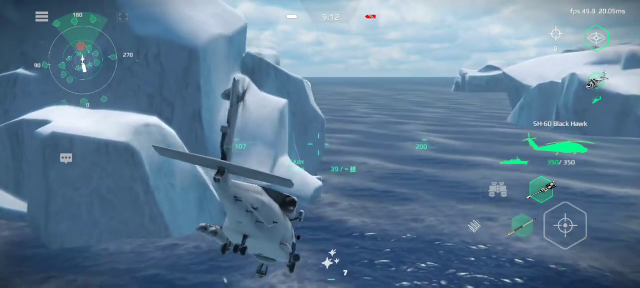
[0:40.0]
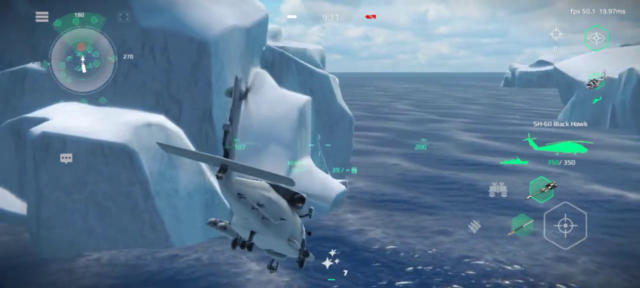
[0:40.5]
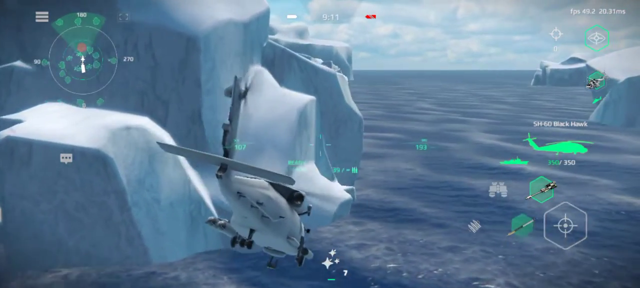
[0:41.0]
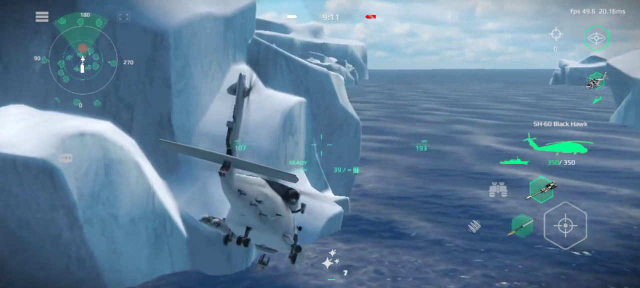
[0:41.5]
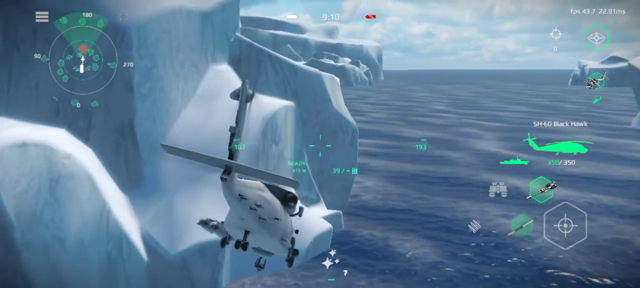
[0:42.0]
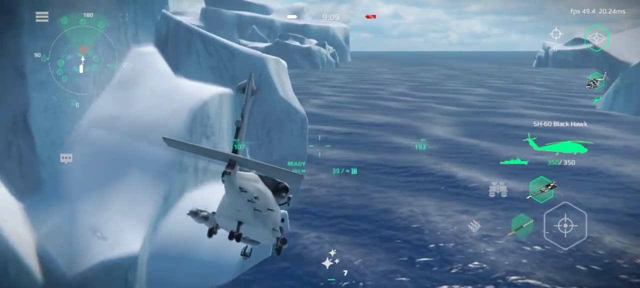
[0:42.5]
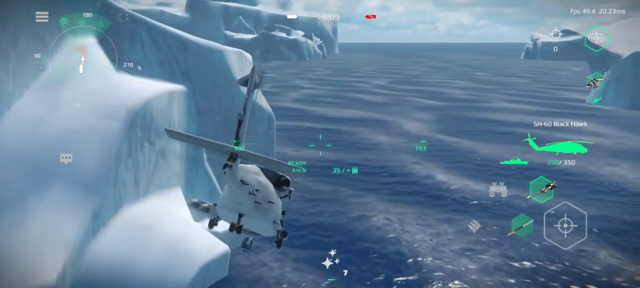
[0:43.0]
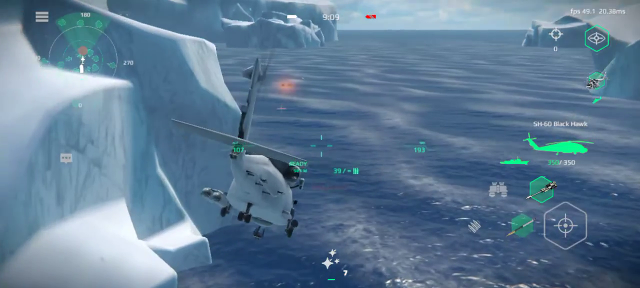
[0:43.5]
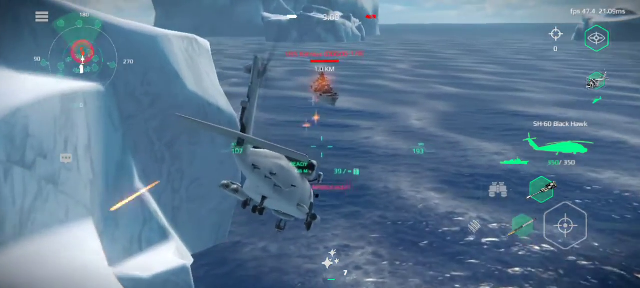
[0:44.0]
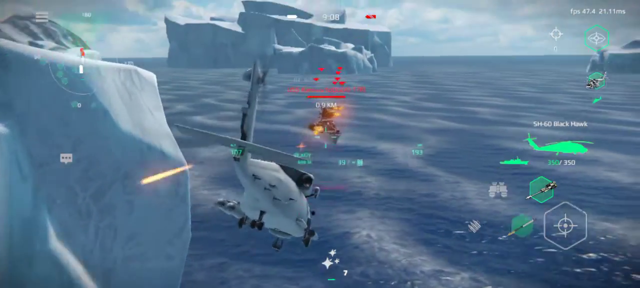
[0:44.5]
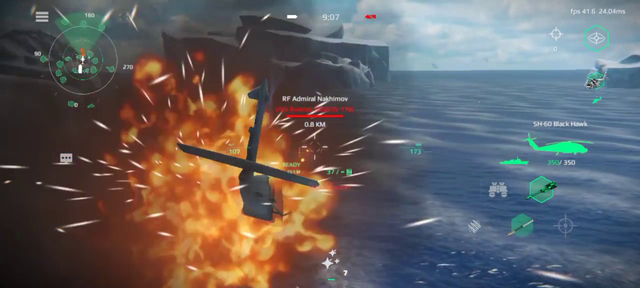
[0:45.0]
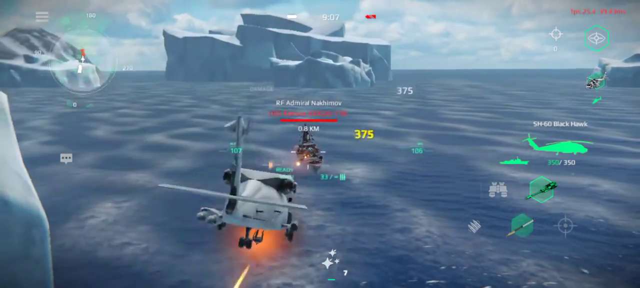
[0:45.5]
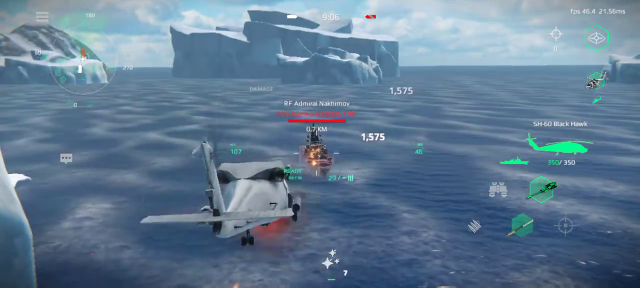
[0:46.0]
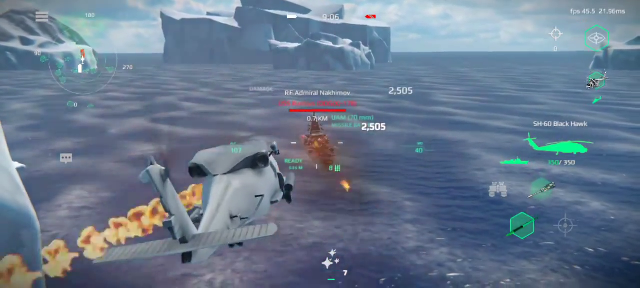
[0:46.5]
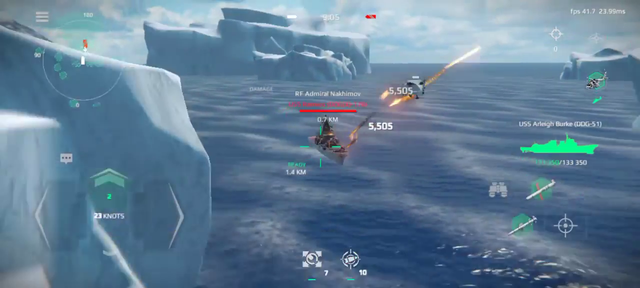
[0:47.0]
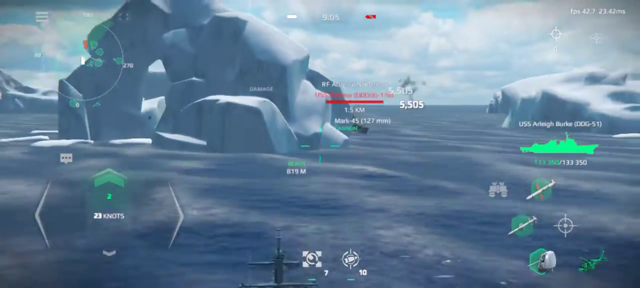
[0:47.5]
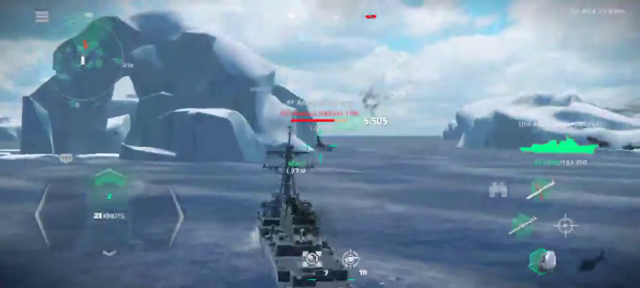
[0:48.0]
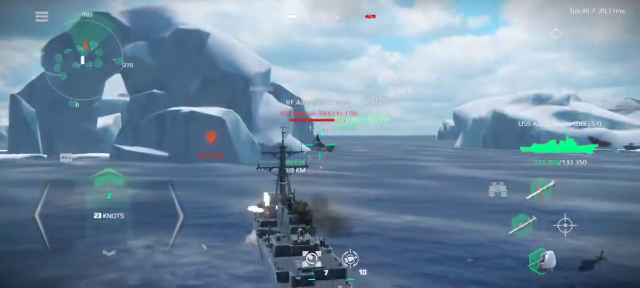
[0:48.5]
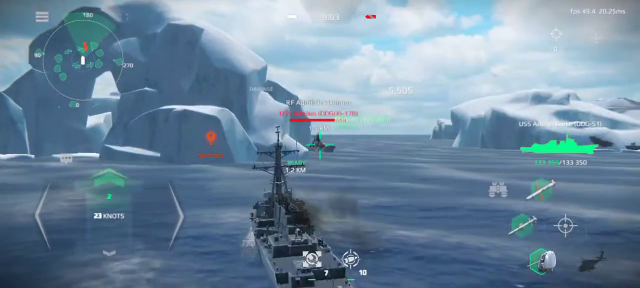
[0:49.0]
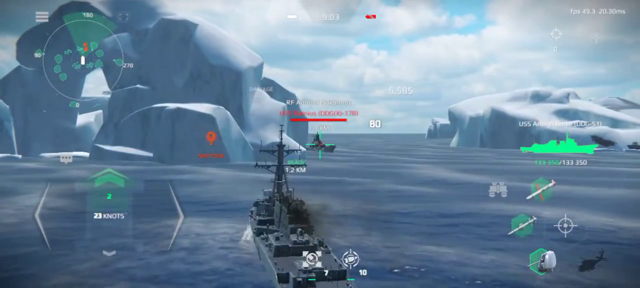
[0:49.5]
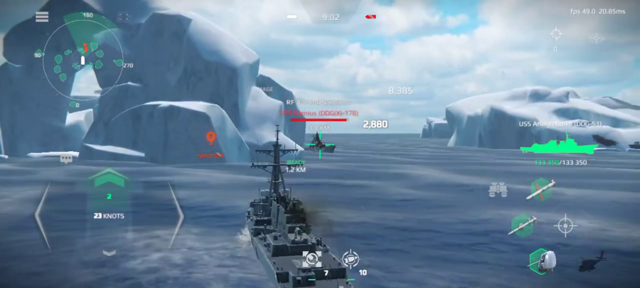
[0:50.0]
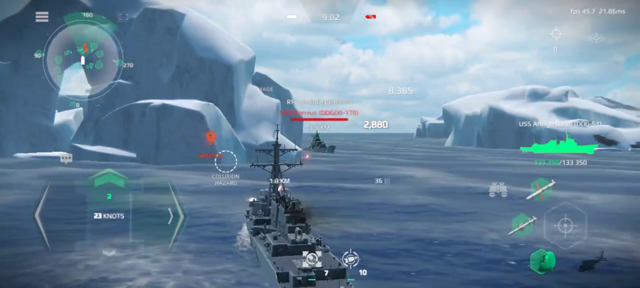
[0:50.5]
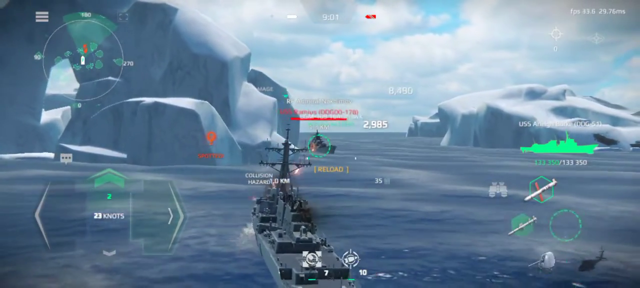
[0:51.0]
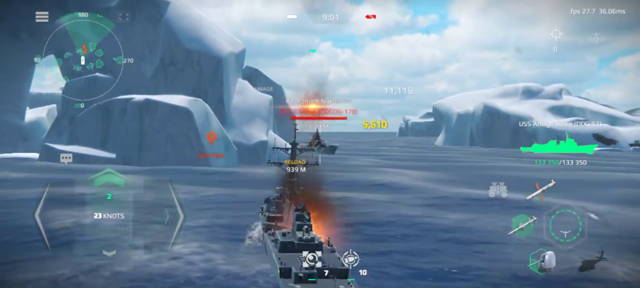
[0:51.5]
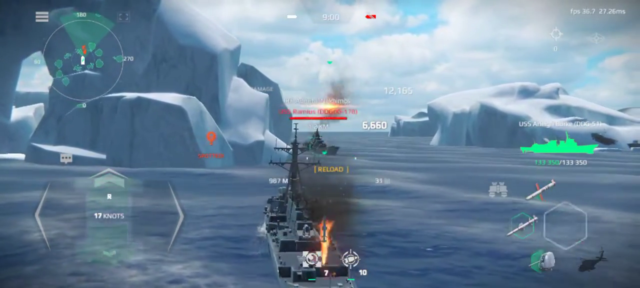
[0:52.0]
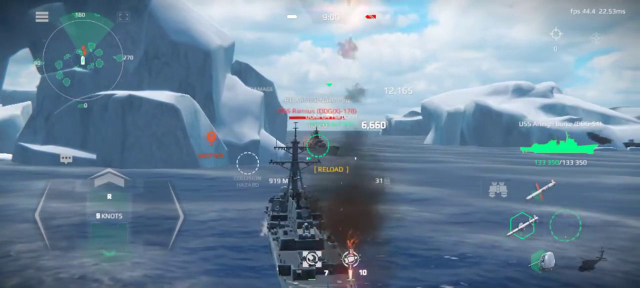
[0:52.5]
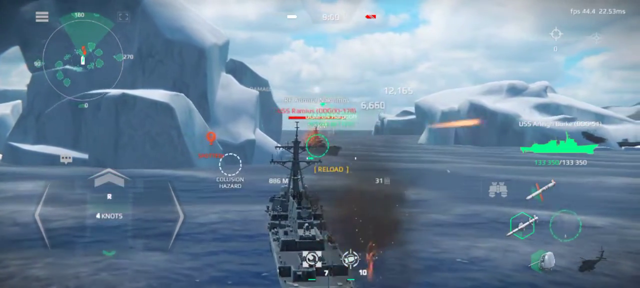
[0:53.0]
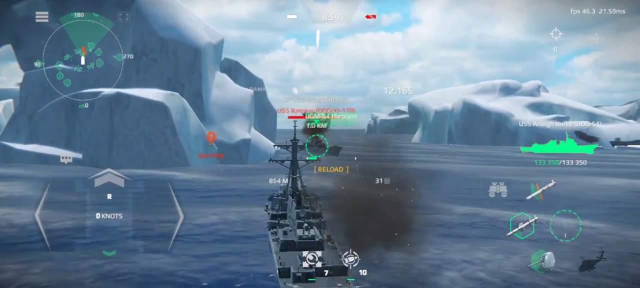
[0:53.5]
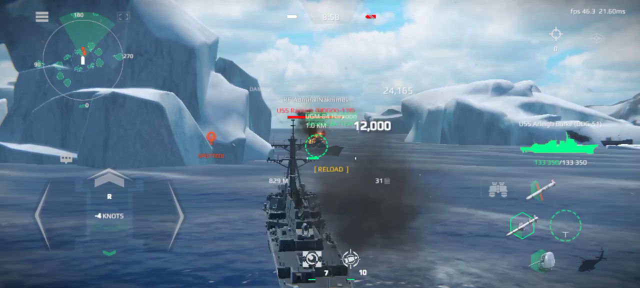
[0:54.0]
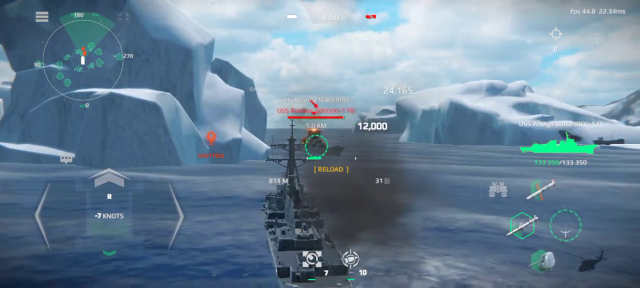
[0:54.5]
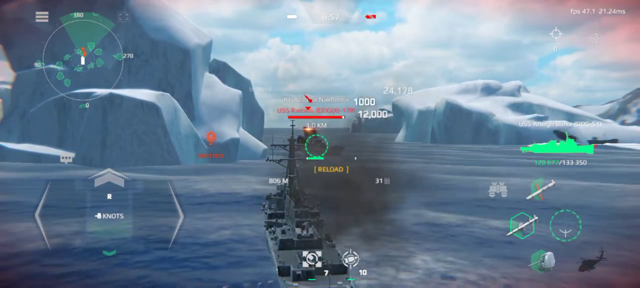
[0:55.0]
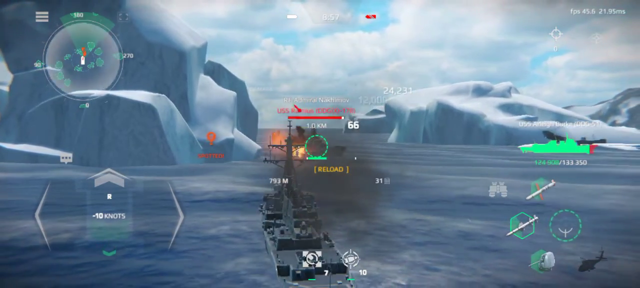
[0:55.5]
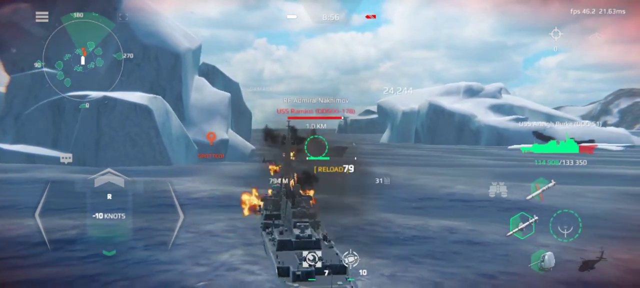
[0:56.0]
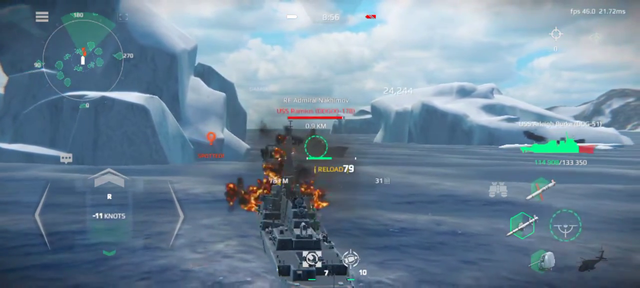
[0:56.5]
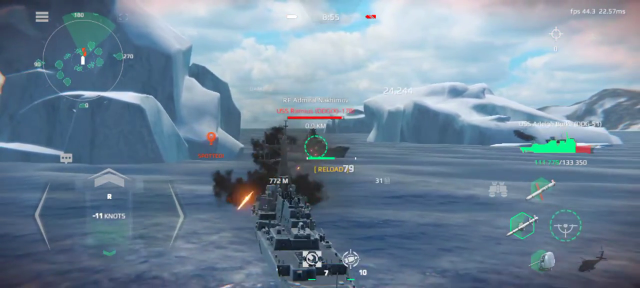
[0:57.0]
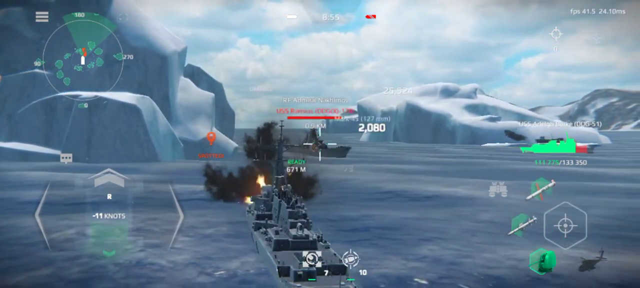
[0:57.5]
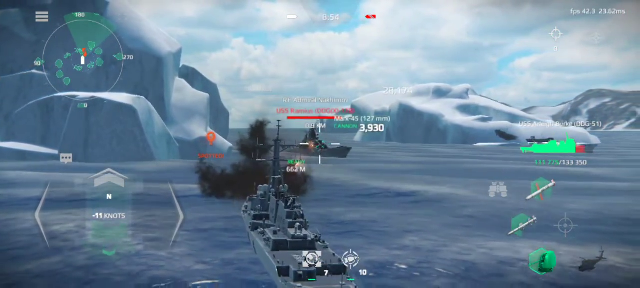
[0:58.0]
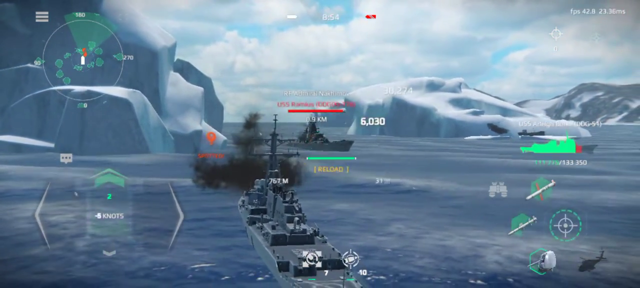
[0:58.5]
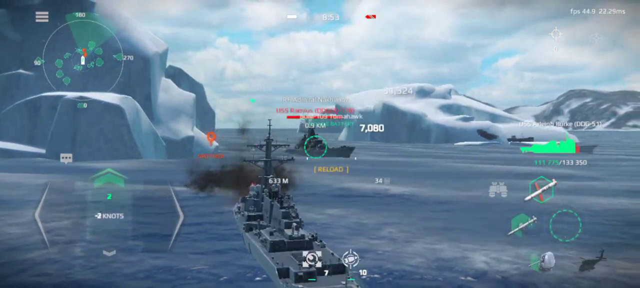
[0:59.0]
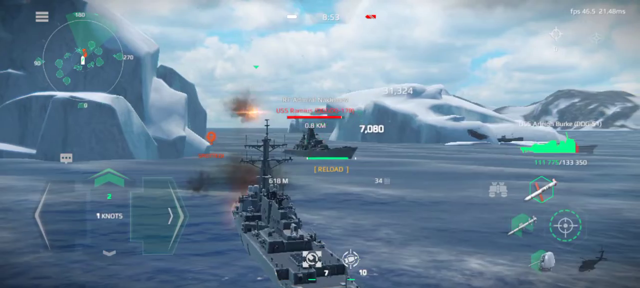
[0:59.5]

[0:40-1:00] In the game, a helicopter, apparently a Black Hawk, is the main character, with an overlay on the right-hand side. The Black Hawk flies over the ocean and seems to be fighting a ship that looks like a military-type boat. The Black Hawk appears to be shot down by the boat and disappears, and the camera then focuses on another ship that looks to be on the same side as the helicopter. Off in the distance, this user-controlled ship seems to be fighting an NPC-type ship. Missiles come from the controlled ship, a lifeline is above the NPC ship, and yellow numbers pop up on the screen indicating the hits the NPC ship is taking.